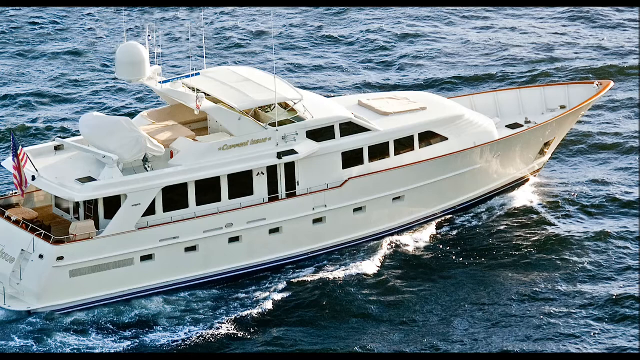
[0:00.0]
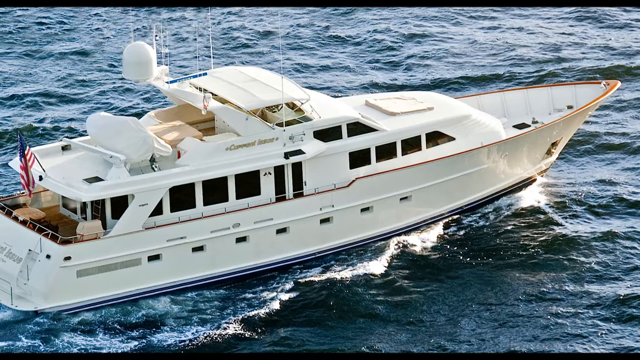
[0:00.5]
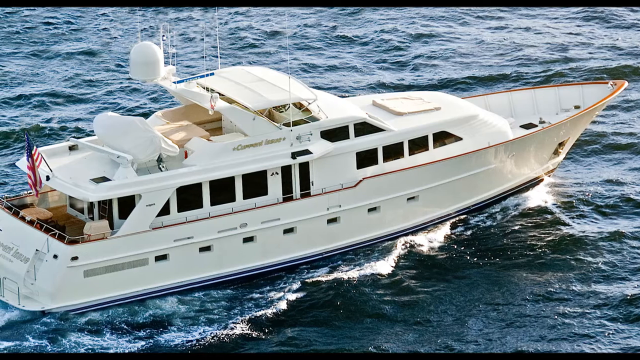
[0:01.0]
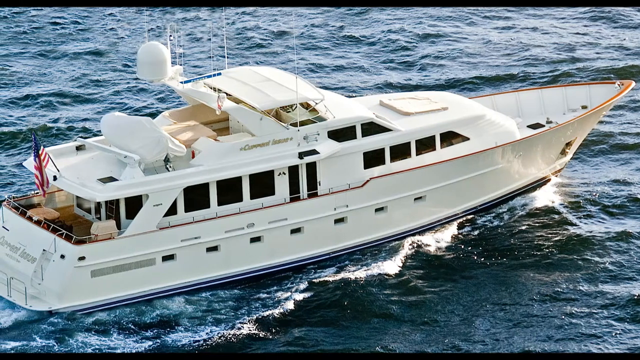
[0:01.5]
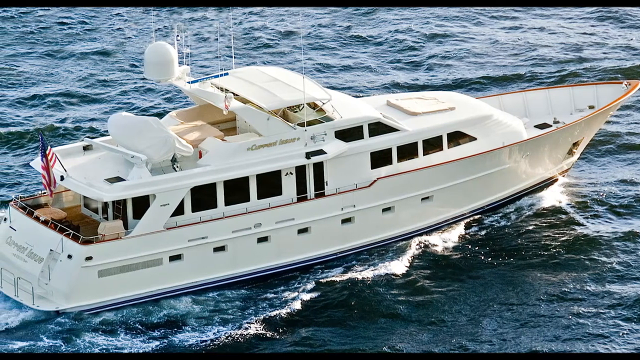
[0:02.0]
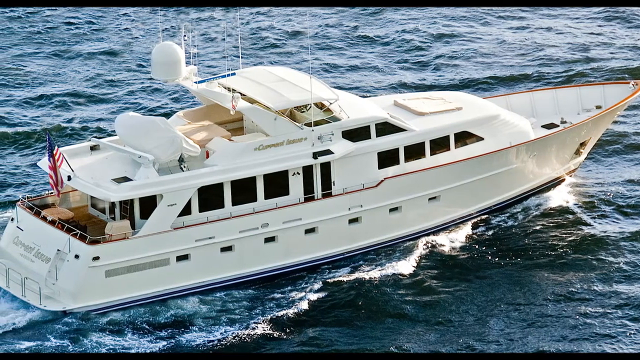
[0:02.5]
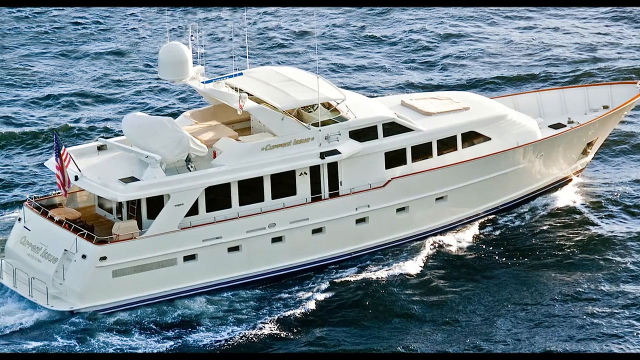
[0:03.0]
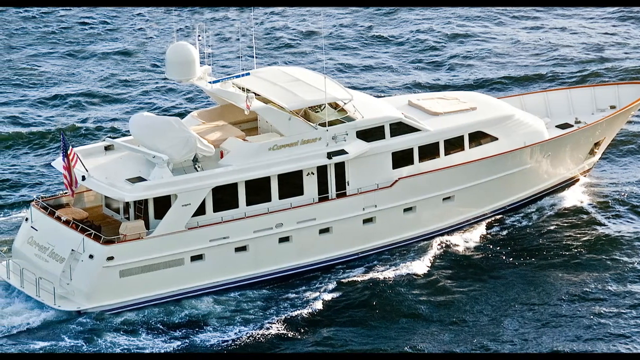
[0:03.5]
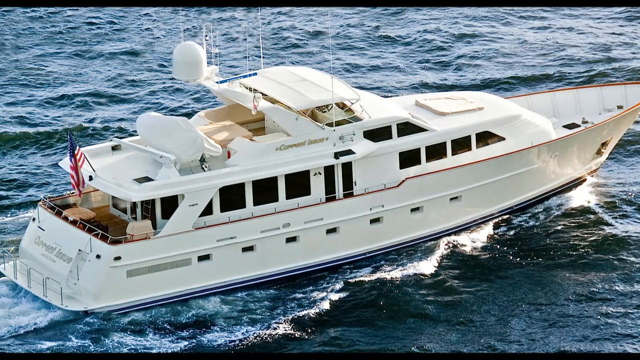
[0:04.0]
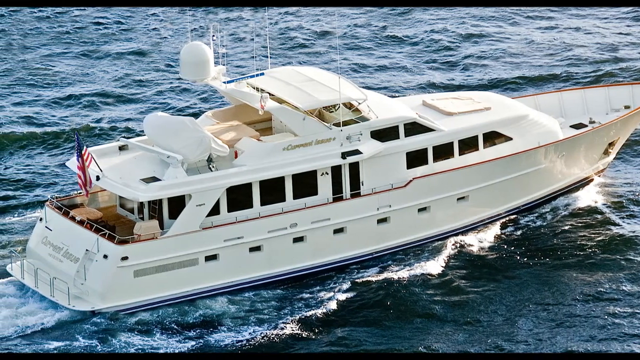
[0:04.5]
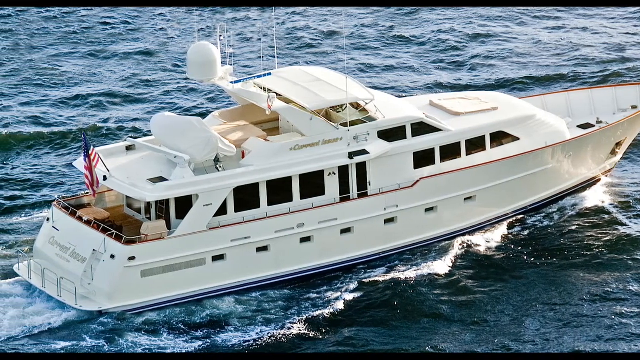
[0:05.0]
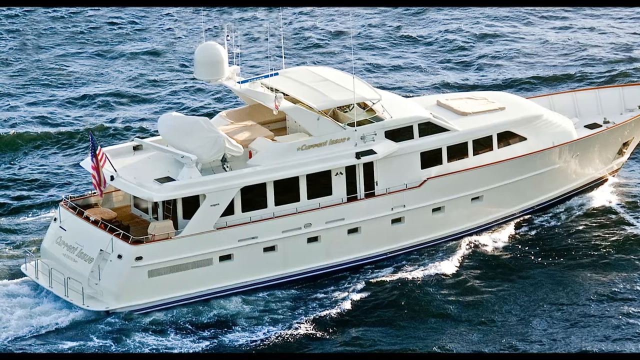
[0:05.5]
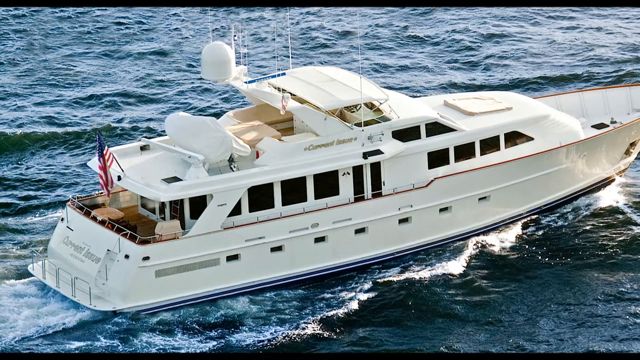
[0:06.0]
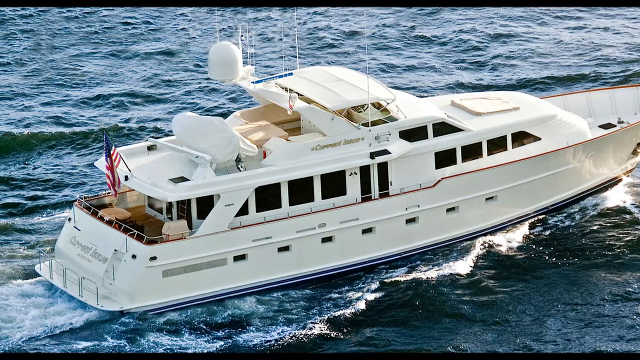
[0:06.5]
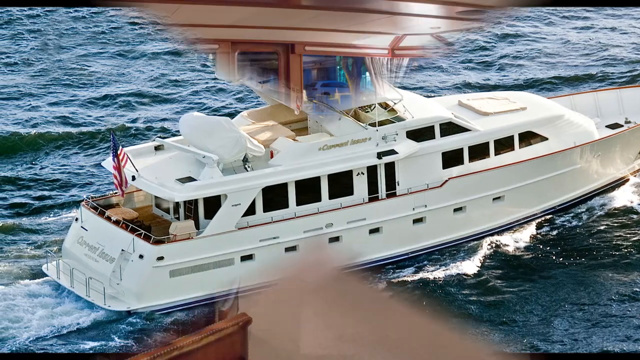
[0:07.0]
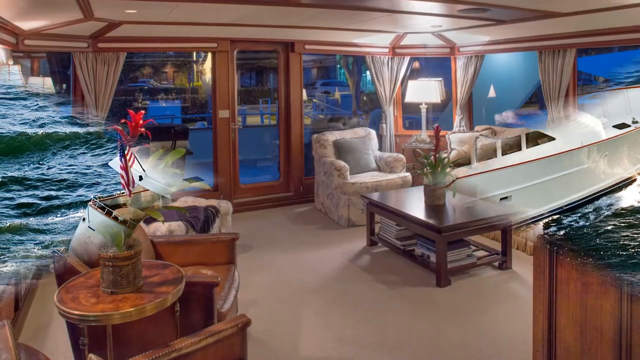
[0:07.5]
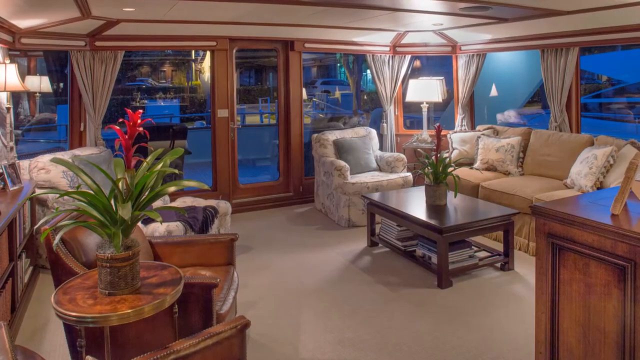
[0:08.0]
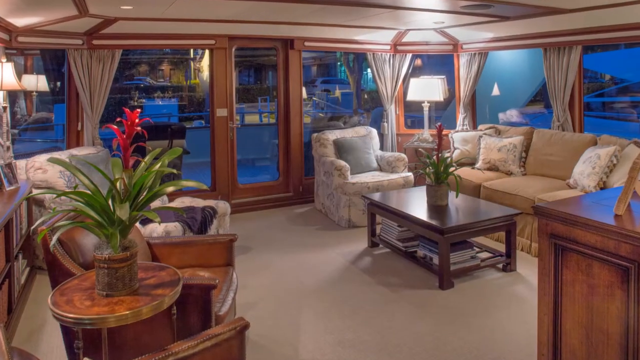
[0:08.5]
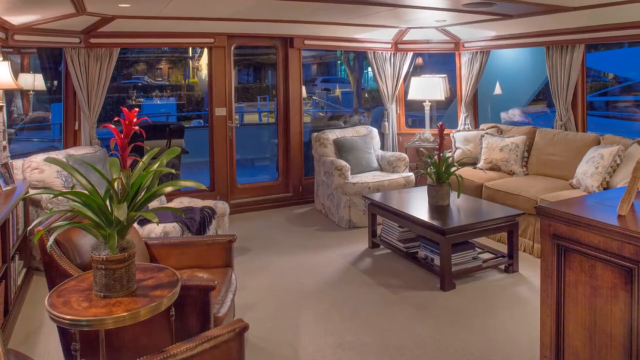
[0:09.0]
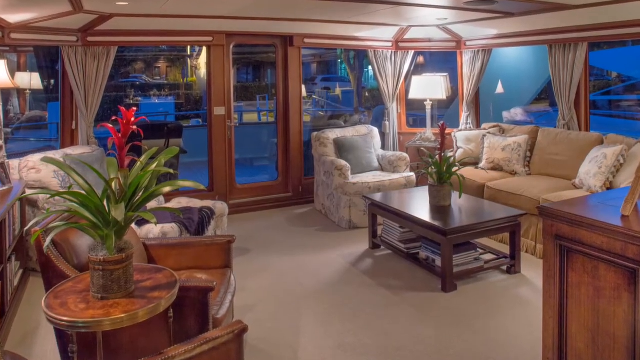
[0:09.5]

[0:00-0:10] The motor yacht HAUTREE, formerly known as WOW, is shown; it was built by the Burger Boat Company in 2004 and is a 32.3-meter, or about 106-foot, motor yacht. A full shot shows the yacht with an American flag attached to its rear. The video then cuts to the interior, which has a lot of woodwork. The living room has a couch, two chairs with floral prints, a large entertainment or console table, and a few round end tables. The living room is surrounded by glass panels accented with wood trimmings, and the ceiling has many lights.